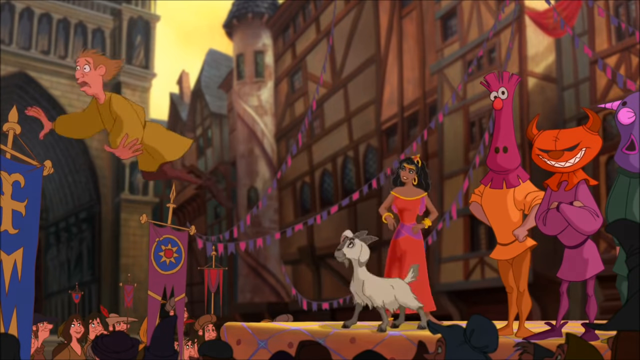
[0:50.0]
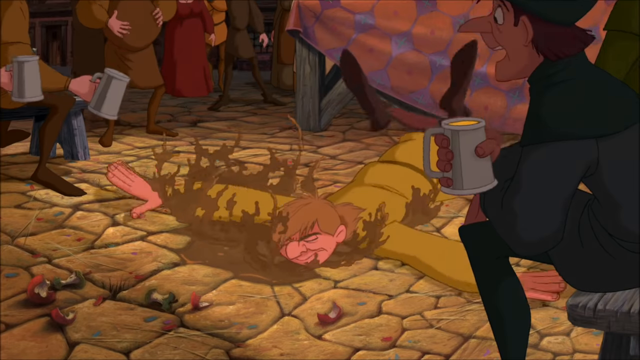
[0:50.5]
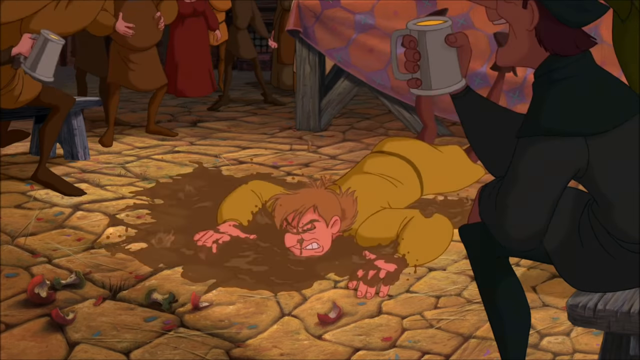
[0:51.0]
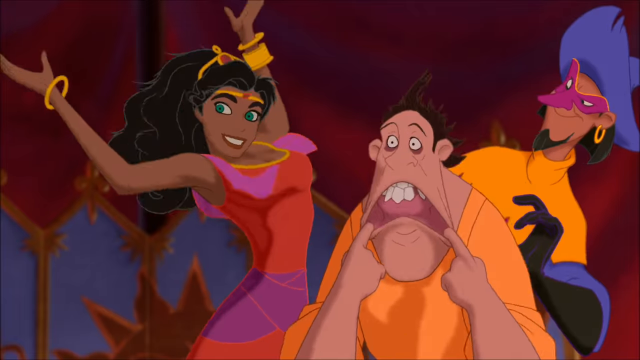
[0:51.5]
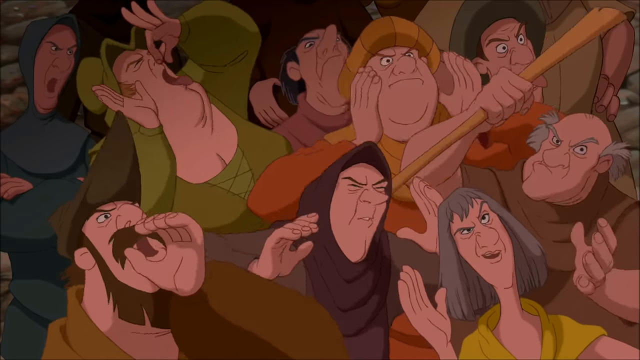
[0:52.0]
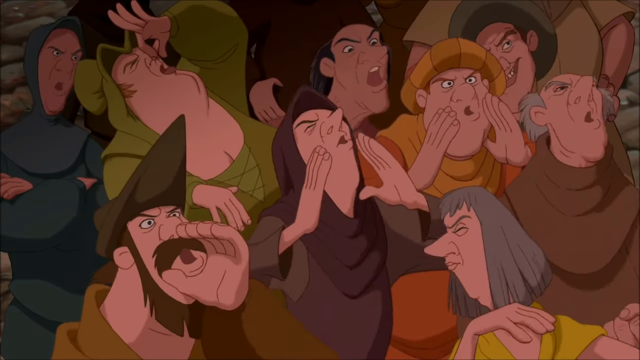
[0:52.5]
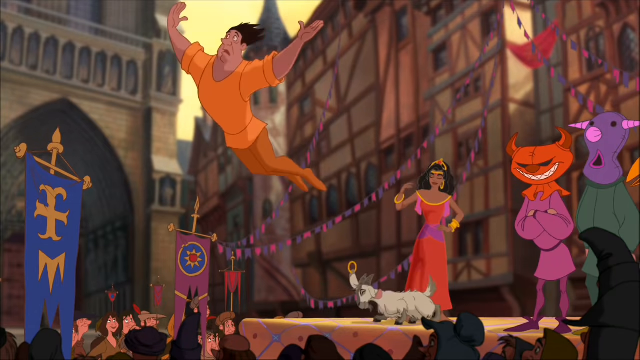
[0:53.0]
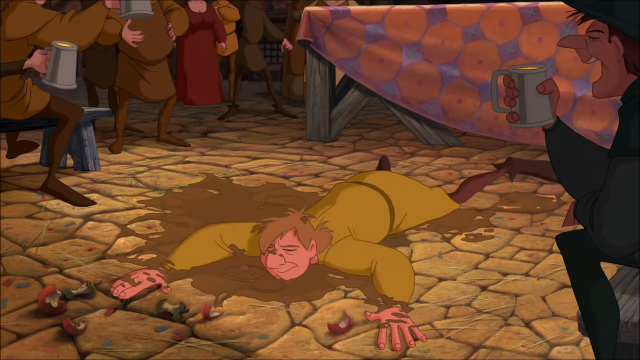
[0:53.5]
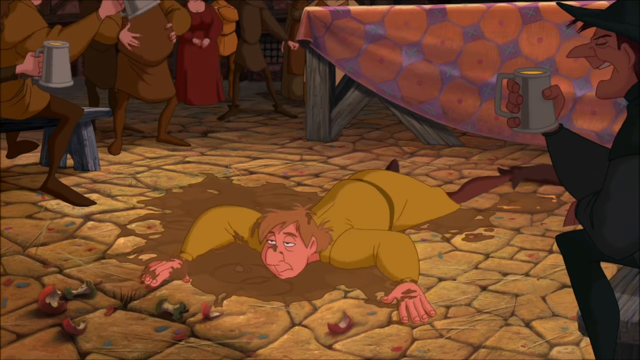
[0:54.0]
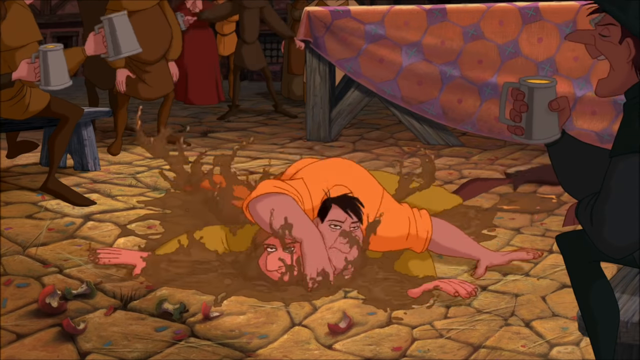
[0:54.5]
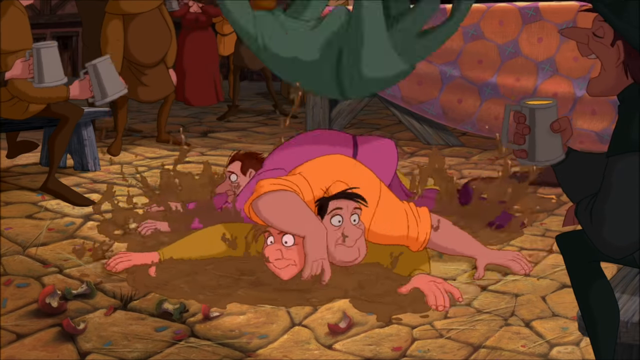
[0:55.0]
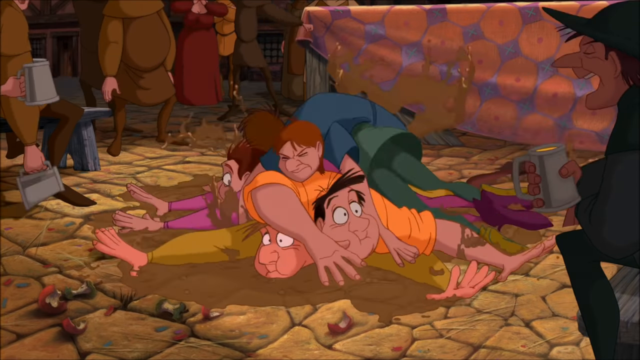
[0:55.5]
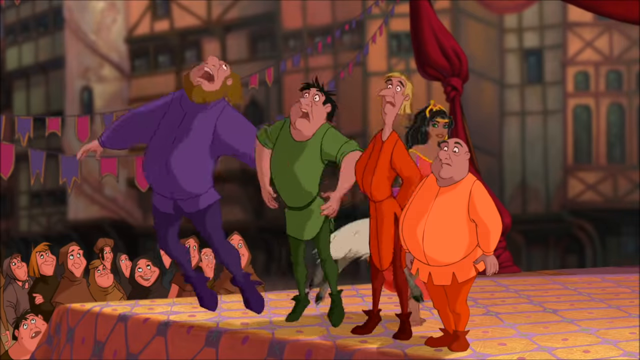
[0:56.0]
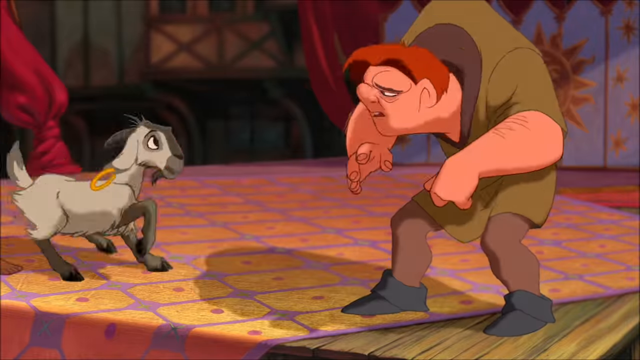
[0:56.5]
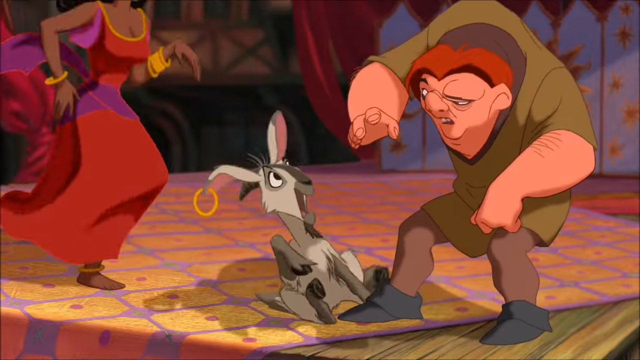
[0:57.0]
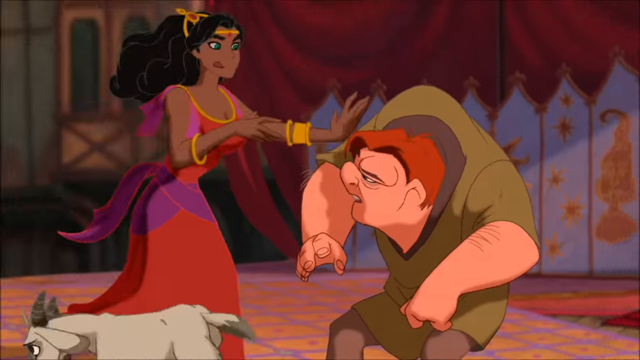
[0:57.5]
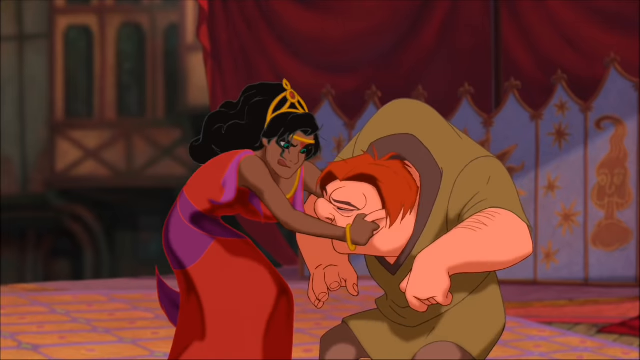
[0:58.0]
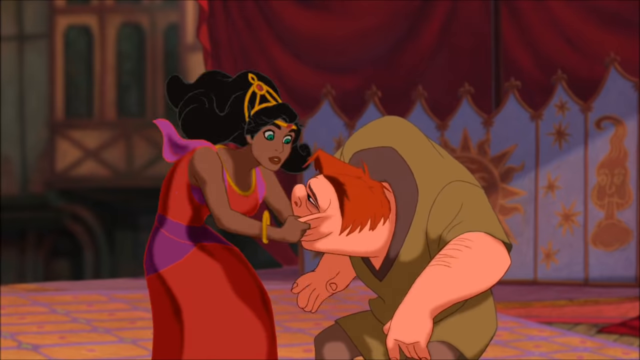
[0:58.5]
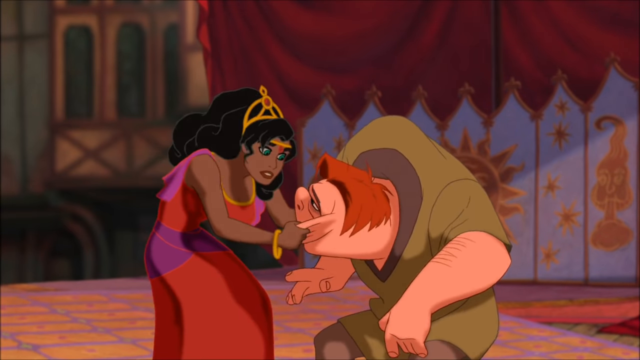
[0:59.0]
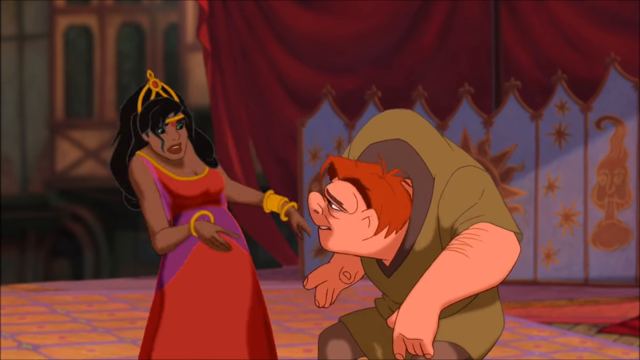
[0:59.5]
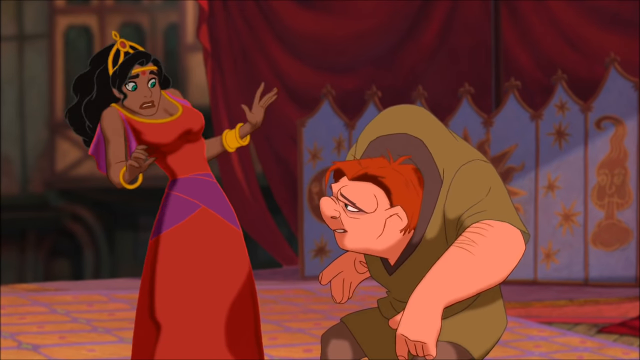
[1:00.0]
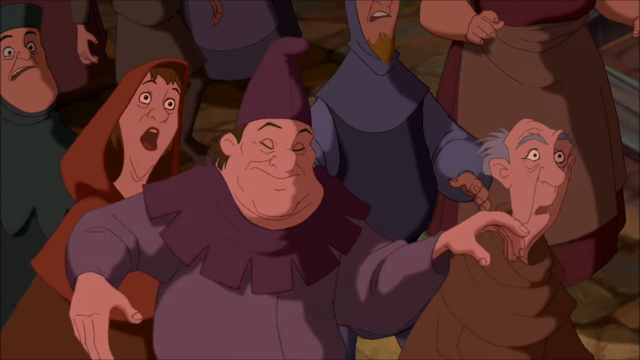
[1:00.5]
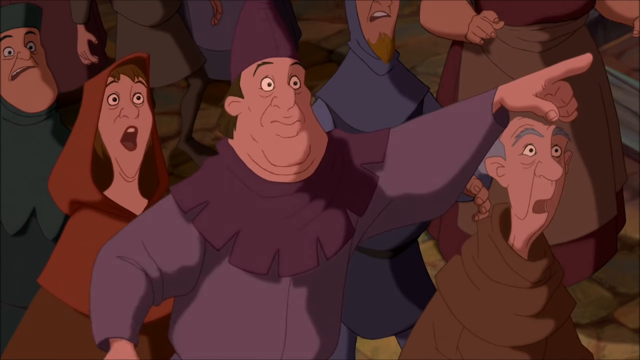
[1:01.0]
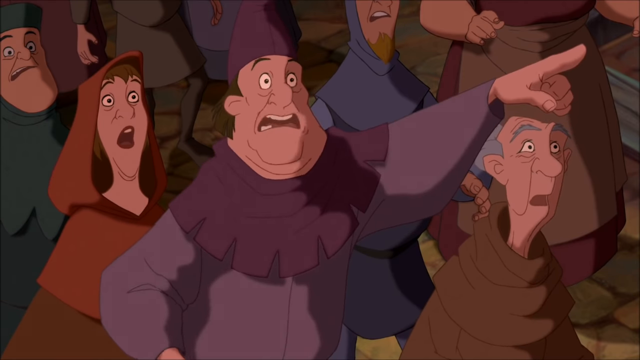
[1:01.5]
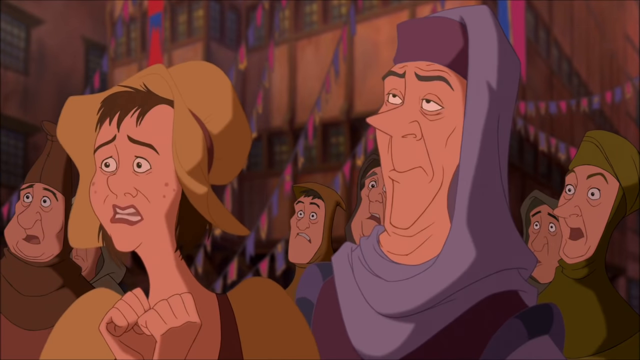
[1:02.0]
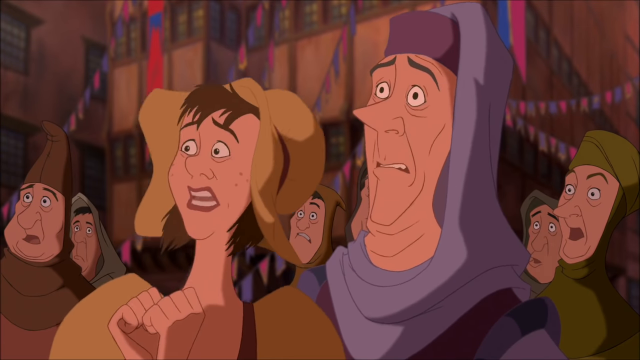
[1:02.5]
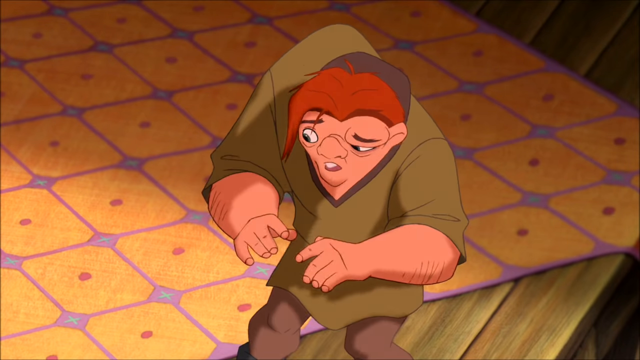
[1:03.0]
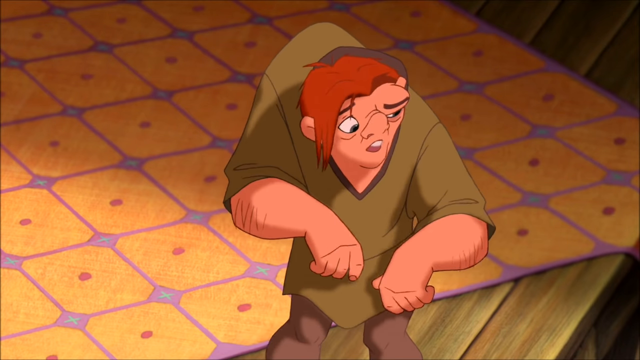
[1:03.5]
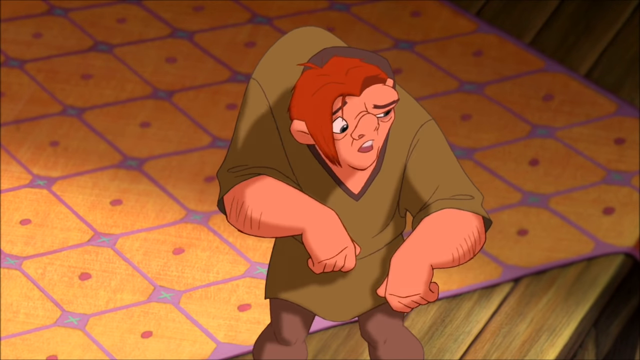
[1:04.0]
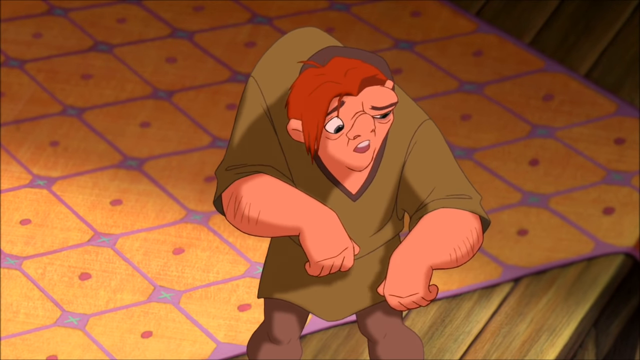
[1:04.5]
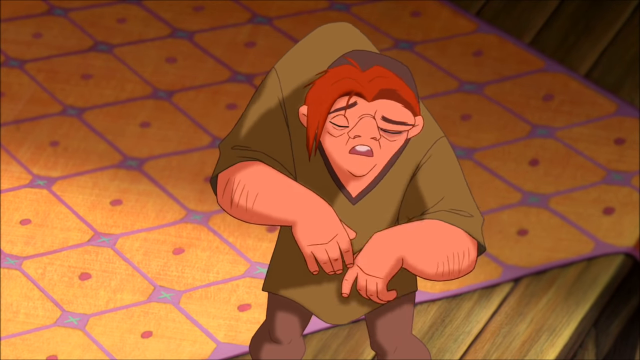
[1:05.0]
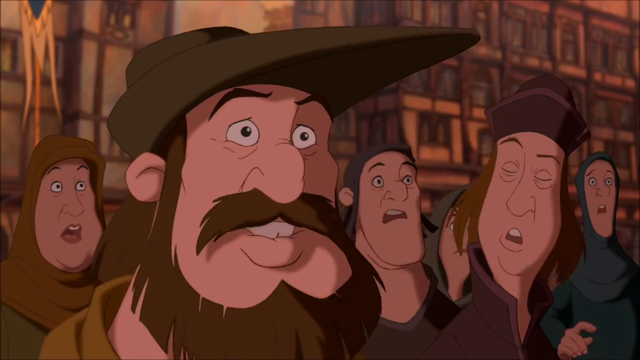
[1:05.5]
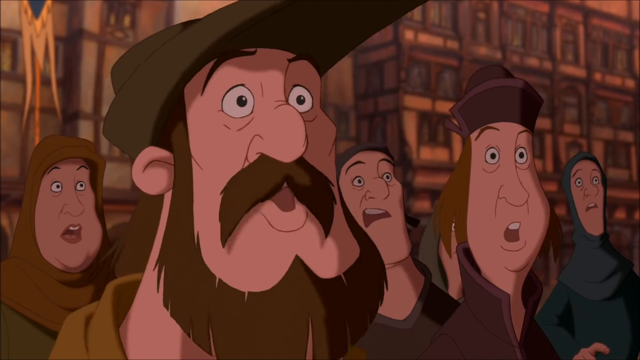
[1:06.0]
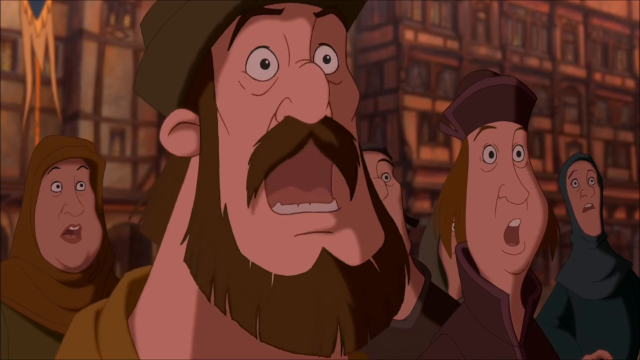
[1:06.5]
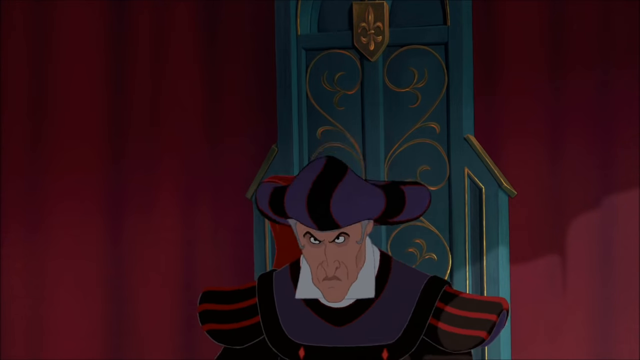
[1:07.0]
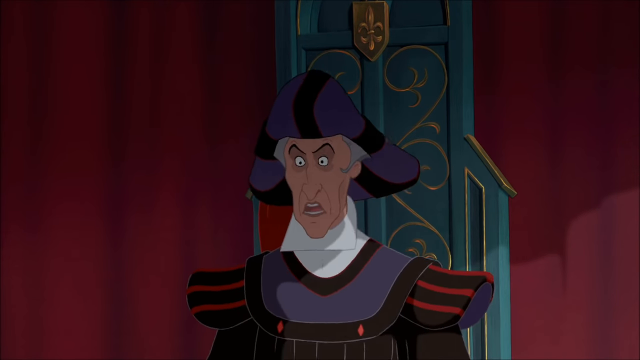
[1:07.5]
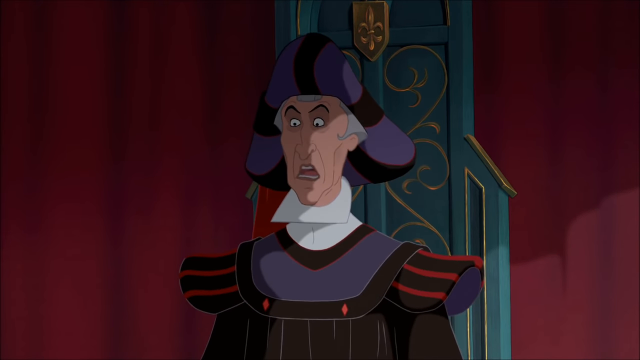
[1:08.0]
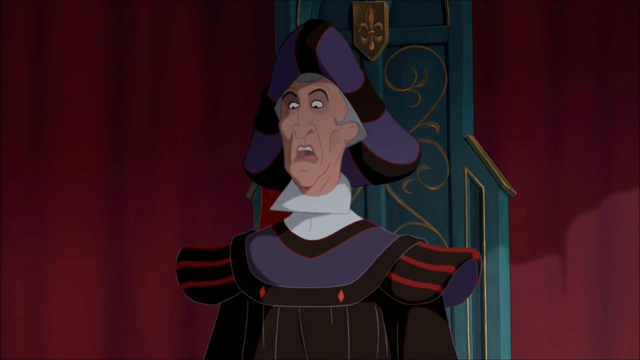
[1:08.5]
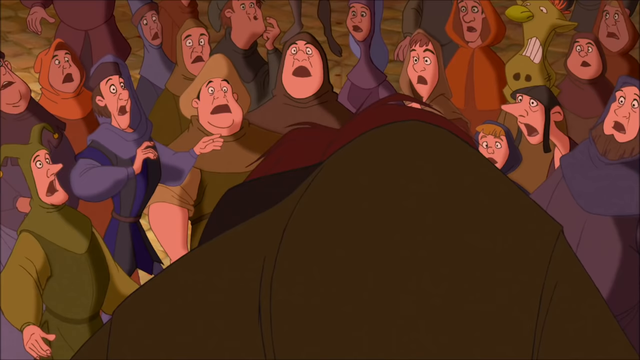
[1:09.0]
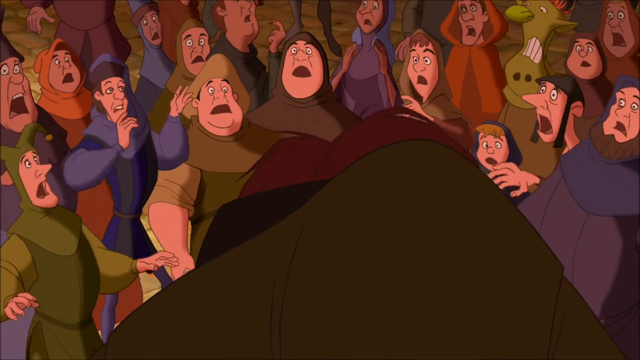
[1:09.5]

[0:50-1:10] The chaotic scene continues with one thing happening after another. Three oddly costumed characters in different colored dresses stand on the stage; everything looks relatively medieval. The green-dressed hunchback seems to be thrown off the stage by the woman who is with the jester, and he lands on the concrete. One by one the headdresses are pulled off the creatures, or they jump or are thrown into the crowd, where they land on top of each other in a big pile. People in the audience watch very carefully as the woman pulls at the green-dressed hunchback again, and the crowd goes wild, acting as if something horrible is happening. Somebody tries to pull the hunchback's face off, and it is actually his real face. Many people yell and look horrified at what is happening on the stage.